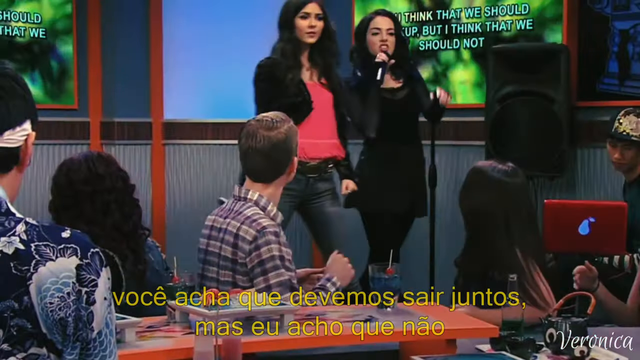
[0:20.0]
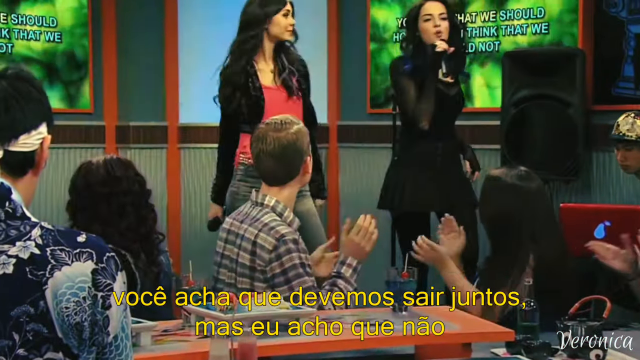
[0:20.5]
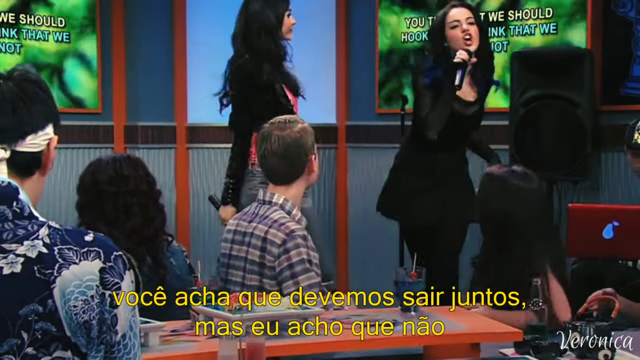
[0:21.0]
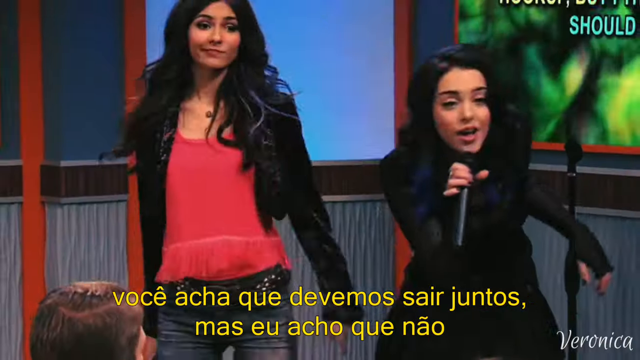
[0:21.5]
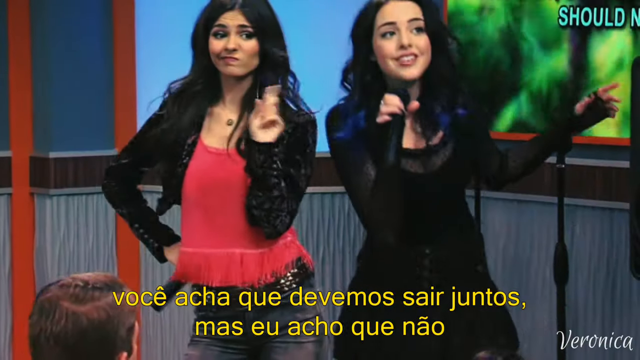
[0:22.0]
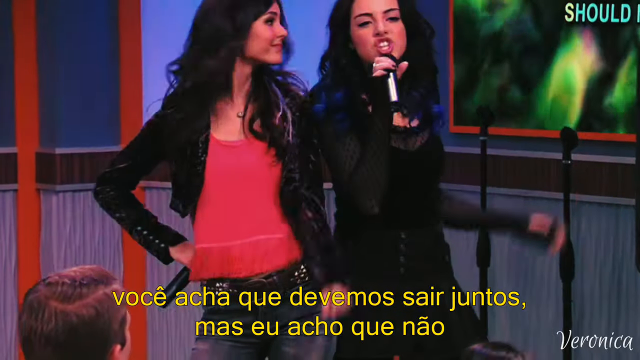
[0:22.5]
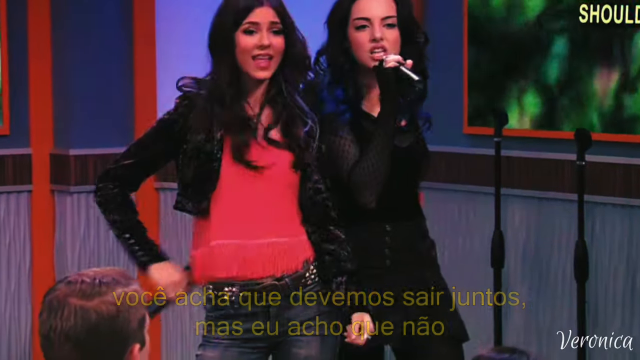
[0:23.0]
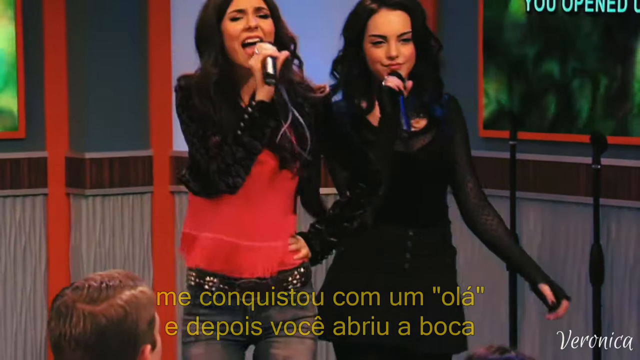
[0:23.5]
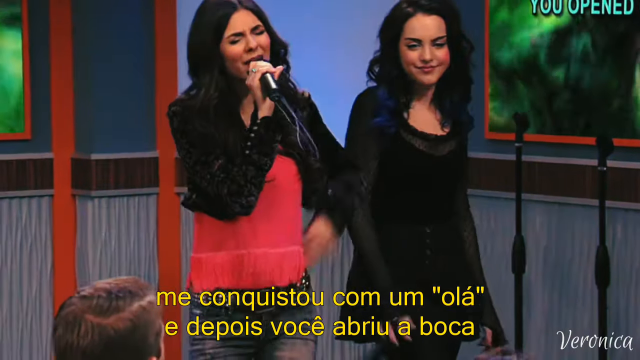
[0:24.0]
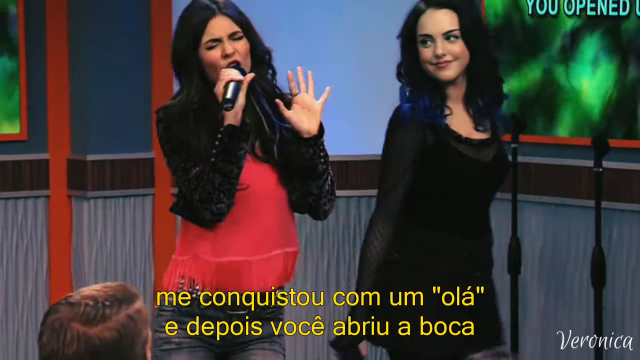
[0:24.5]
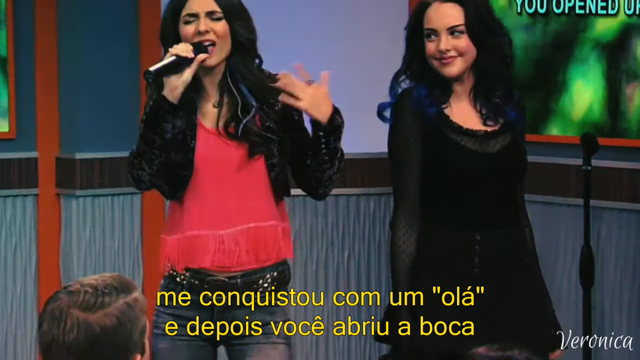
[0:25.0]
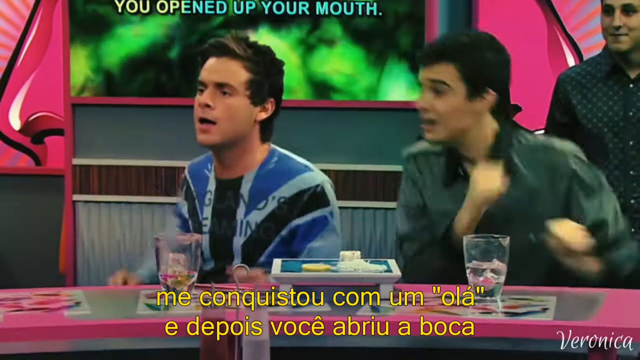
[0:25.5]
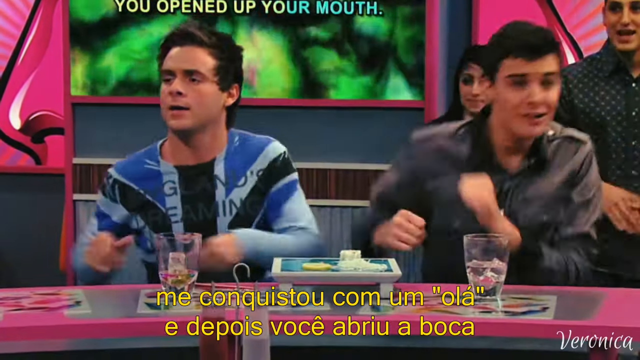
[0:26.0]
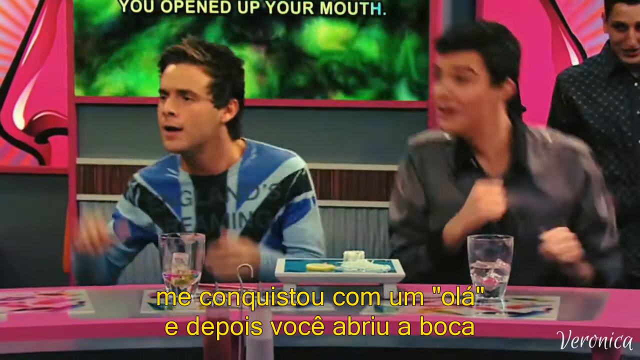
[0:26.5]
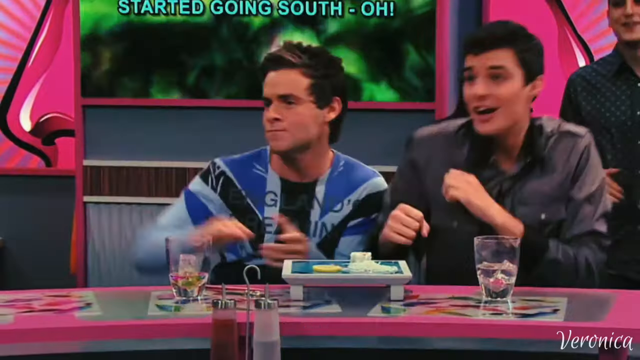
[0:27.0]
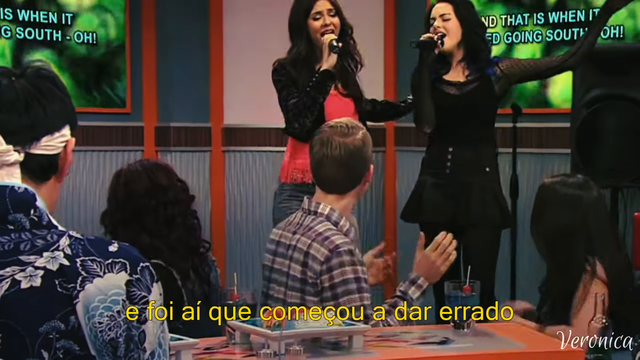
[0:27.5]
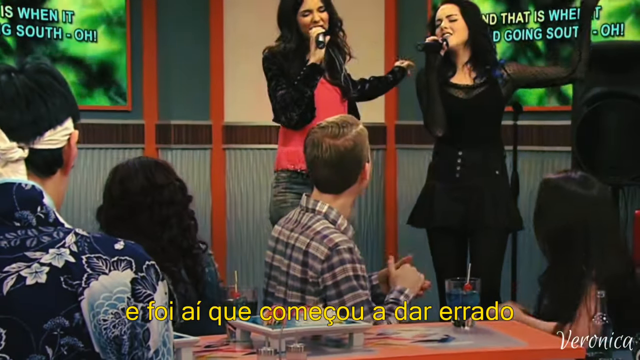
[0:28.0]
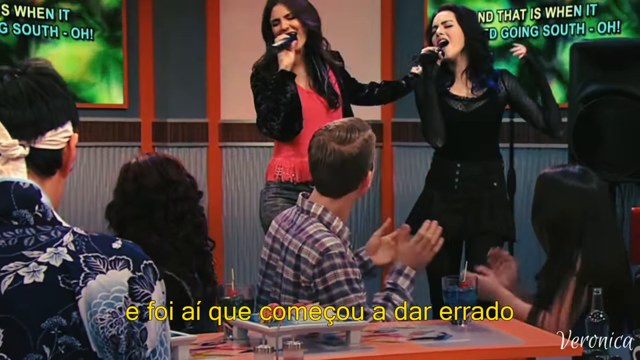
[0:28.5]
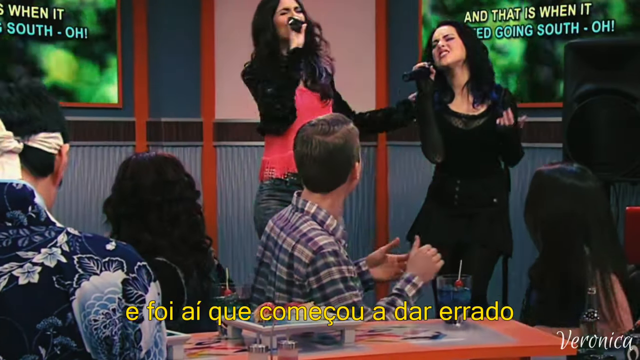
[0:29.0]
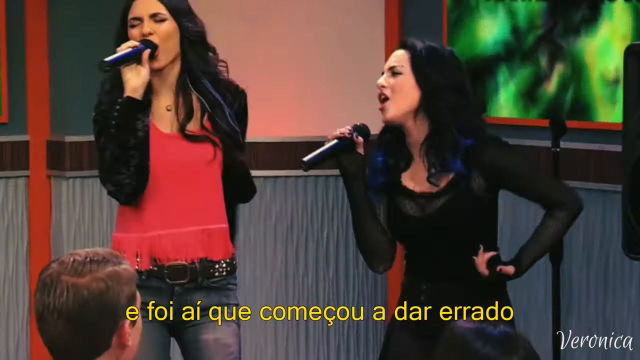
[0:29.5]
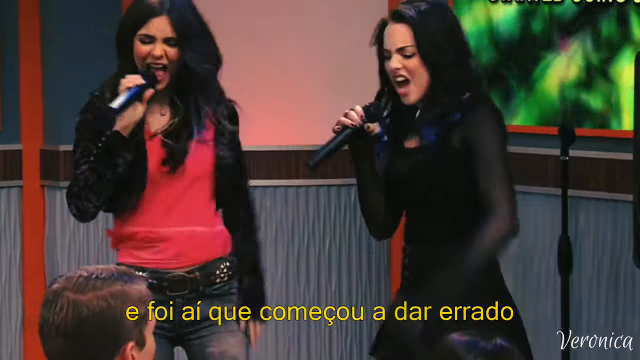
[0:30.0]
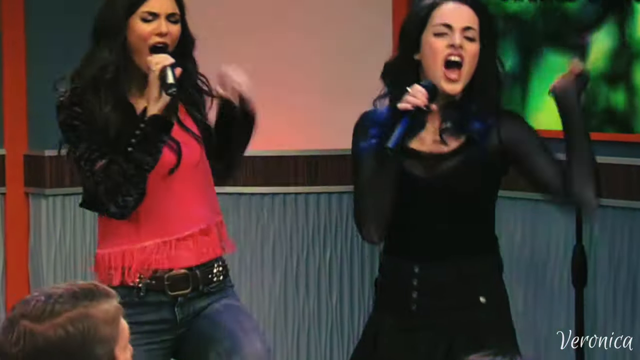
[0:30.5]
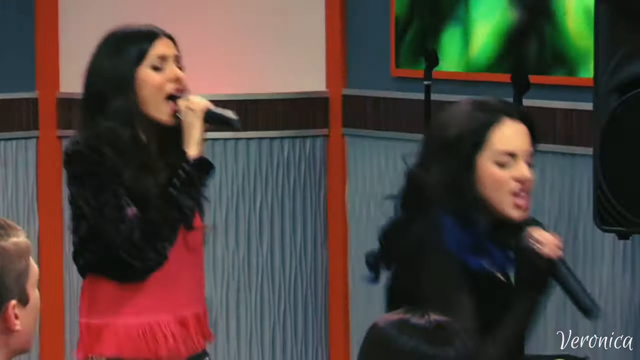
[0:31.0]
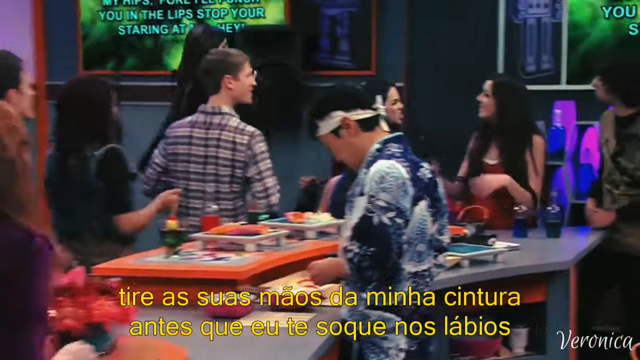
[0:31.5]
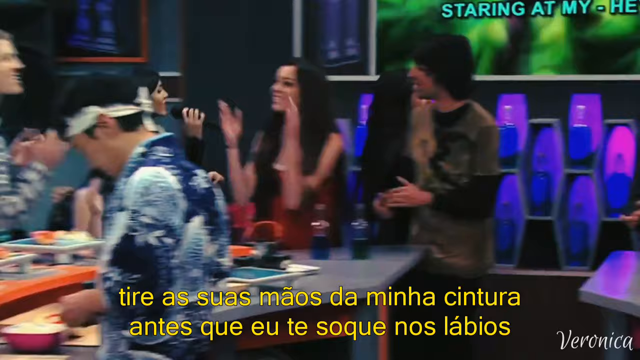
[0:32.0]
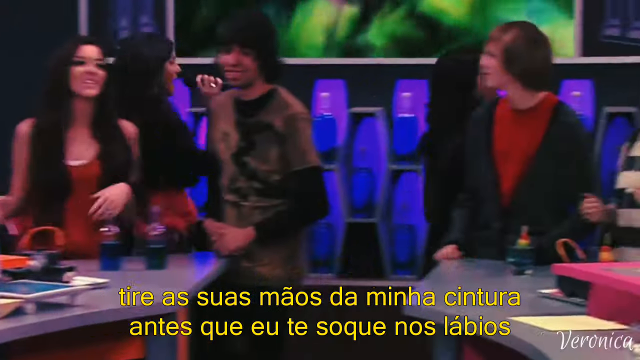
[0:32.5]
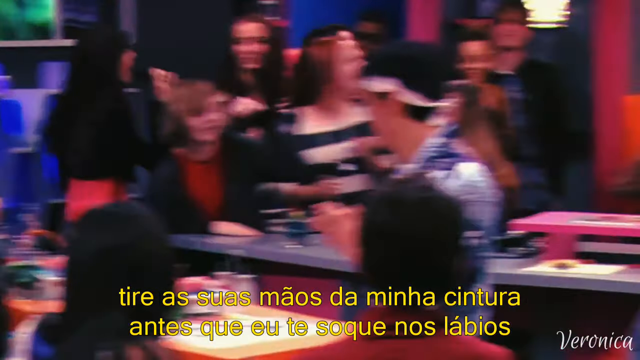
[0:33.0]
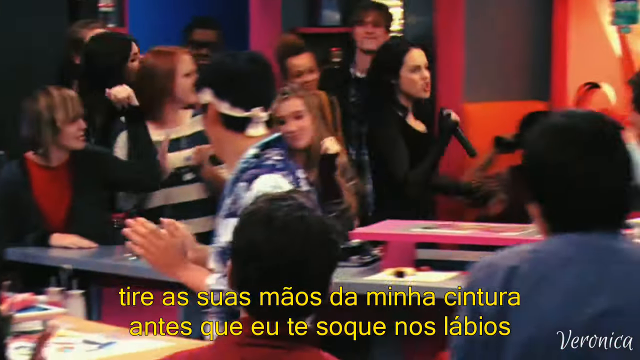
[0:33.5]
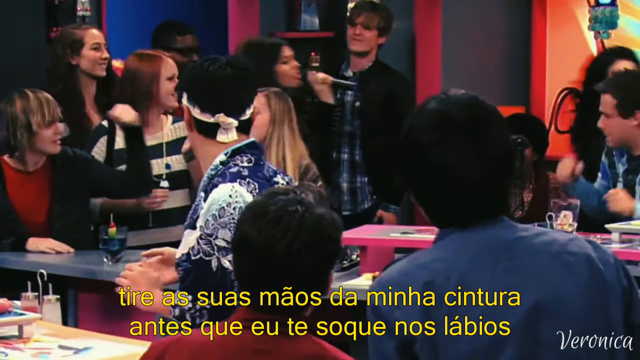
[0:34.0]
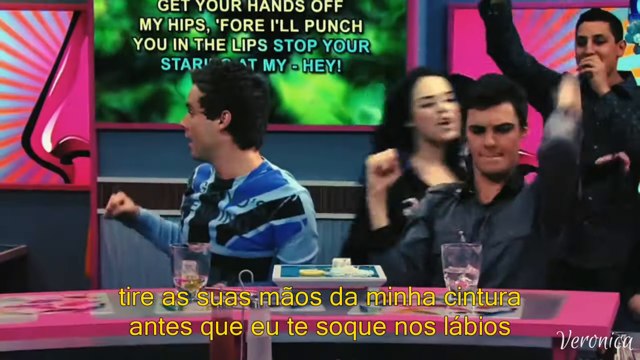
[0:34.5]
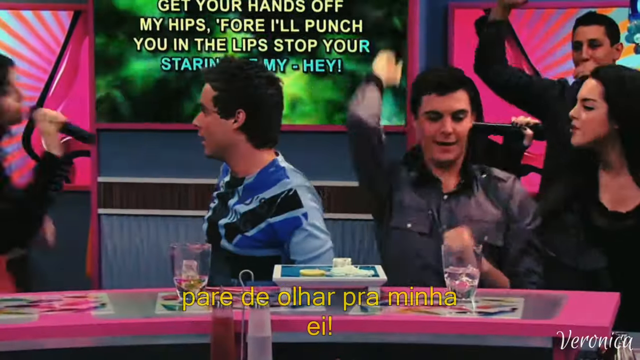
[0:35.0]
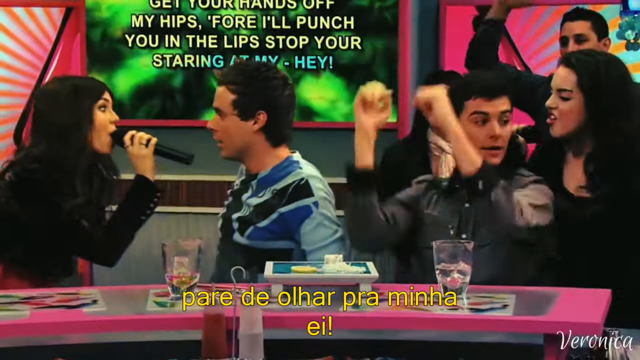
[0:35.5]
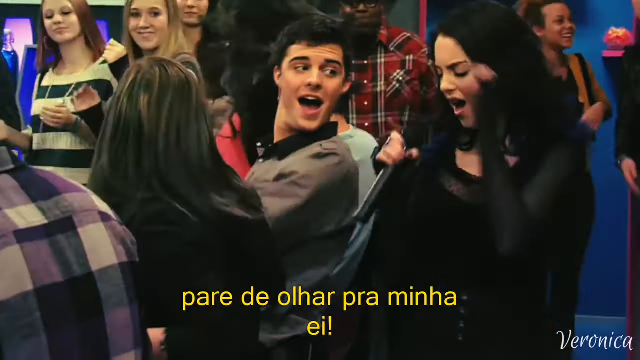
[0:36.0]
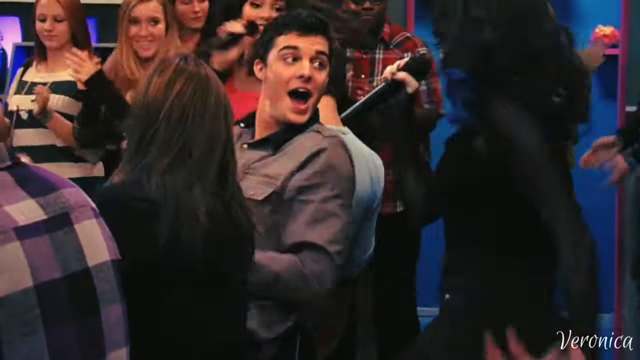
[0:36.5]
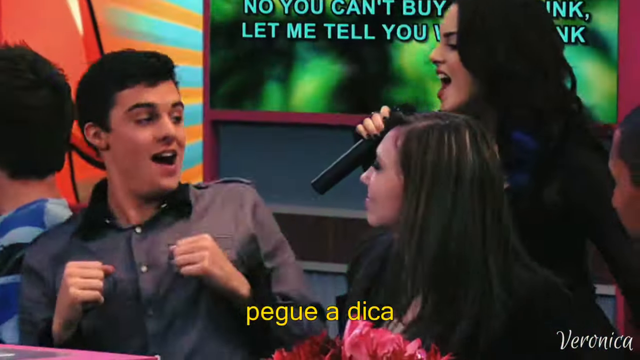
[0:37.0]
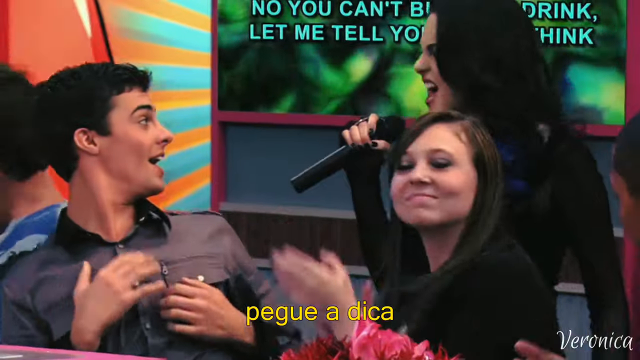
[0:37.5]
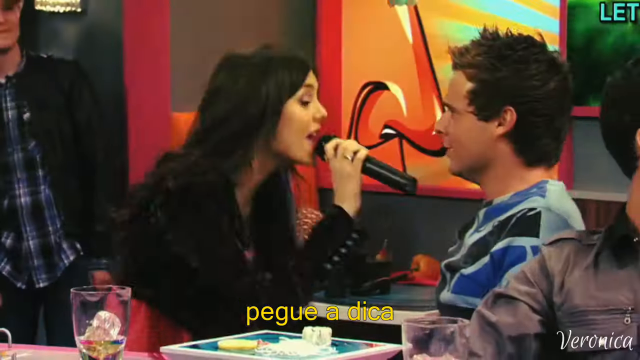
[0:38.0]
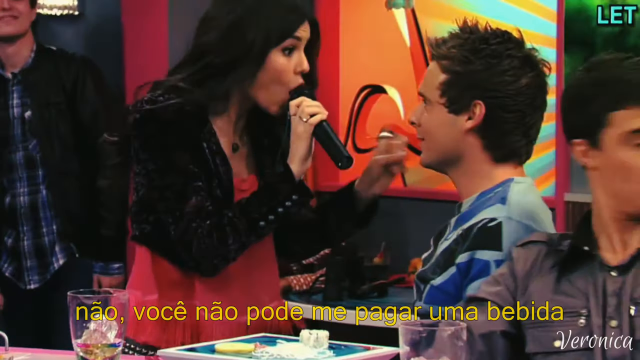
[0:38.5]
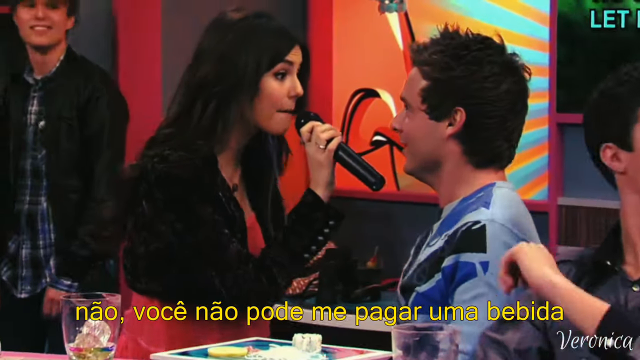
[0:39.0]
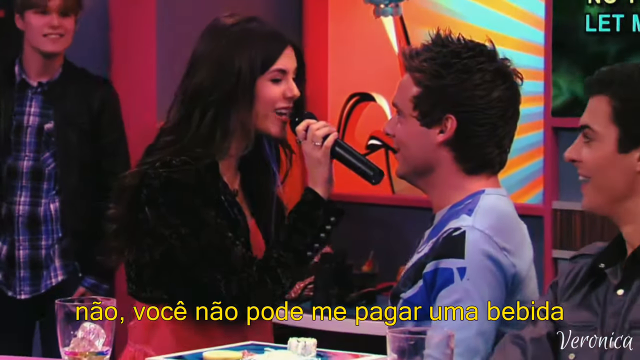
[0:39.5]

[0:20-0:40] The two women keep dancing and singing into their microphones back and forth. The two guys they pointed at, in blue and black shirts, look back at them and point. The women move in toward the crowd of the karaoke bar, closer to the two guys, and point at them as if inviting them to come along. One woman wears the black top and black pants; the other wears the black jacket with a red-pinkish top and blue jeans. They sway back and forth, kind of pointing at the two guys. The guy on the left wears what appears to be an England flag shirt, though it is mostly blue; the other wears a leather jacket, and the rest of his outfit cannot really be seen. Both have dark hair and are clean-shaven. They sit at a table, dancing around and clapping to the beat. The camera pans back to the women dancing and singing on the stage, with people kind of clapping in the foreground. The women then move through the crowd toward the two guys, get one on each side, and look them directly in the face while singing with the microphones close to their mouths. One of them starts playing with the hair of the guy in the blue shirt.